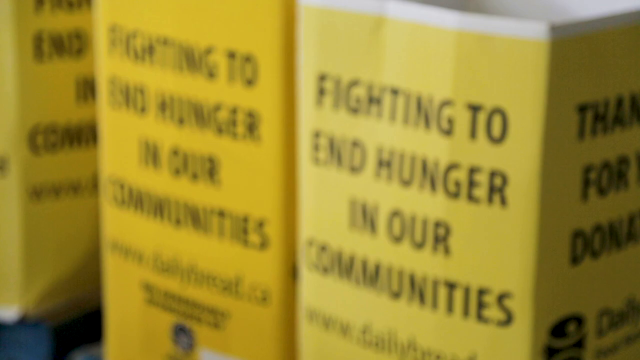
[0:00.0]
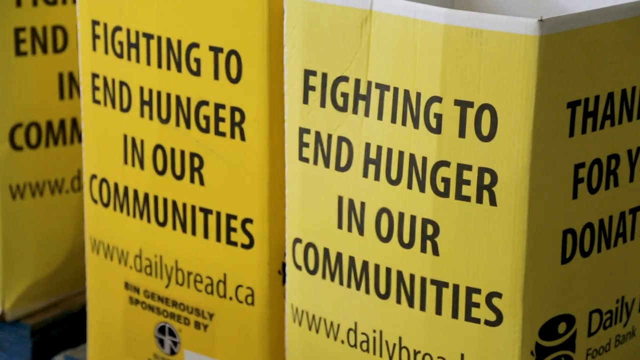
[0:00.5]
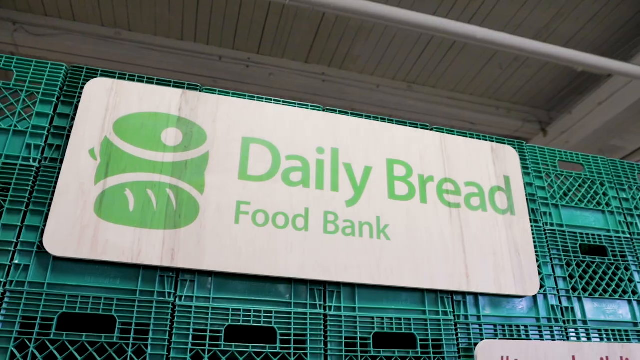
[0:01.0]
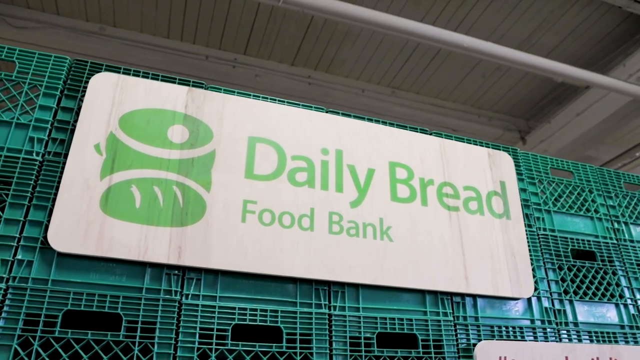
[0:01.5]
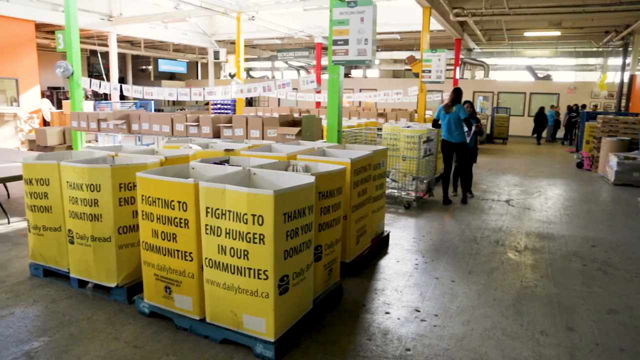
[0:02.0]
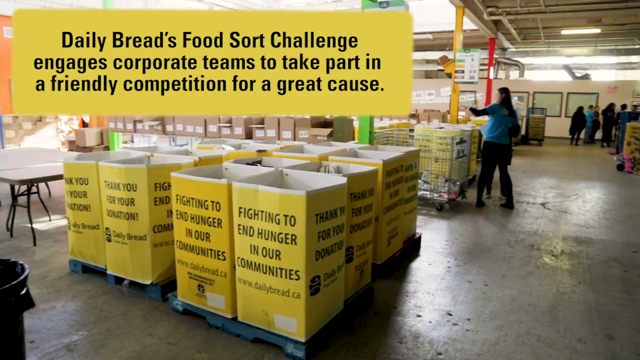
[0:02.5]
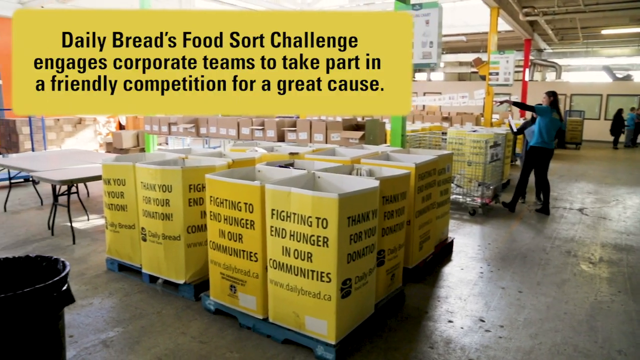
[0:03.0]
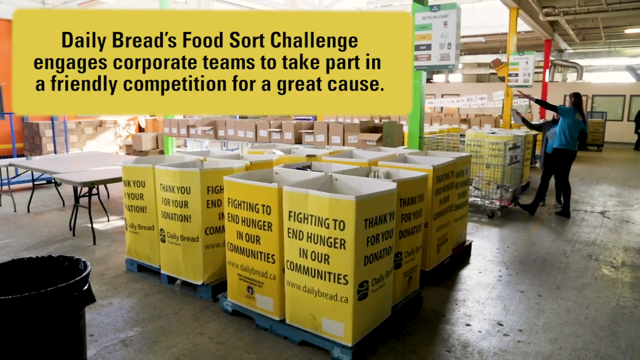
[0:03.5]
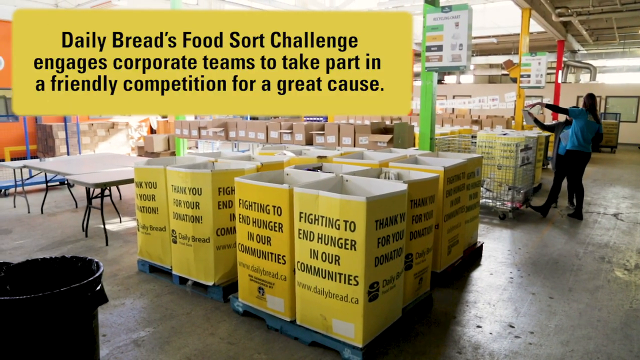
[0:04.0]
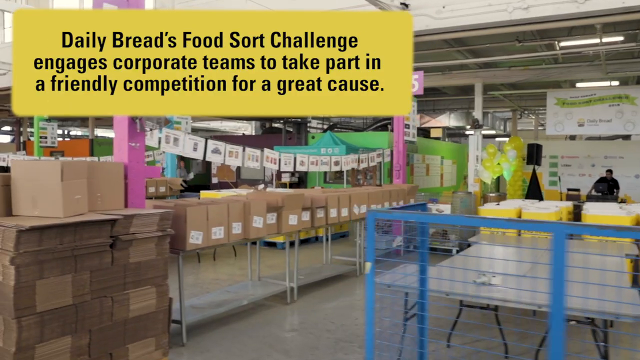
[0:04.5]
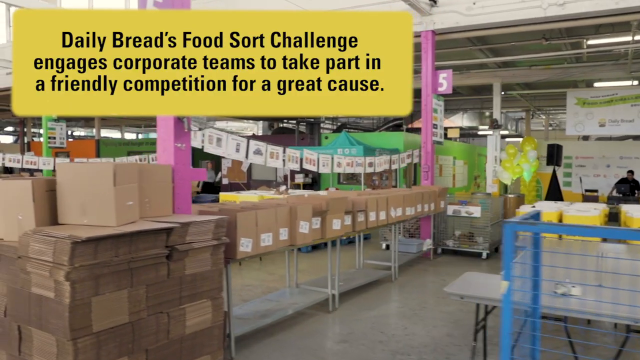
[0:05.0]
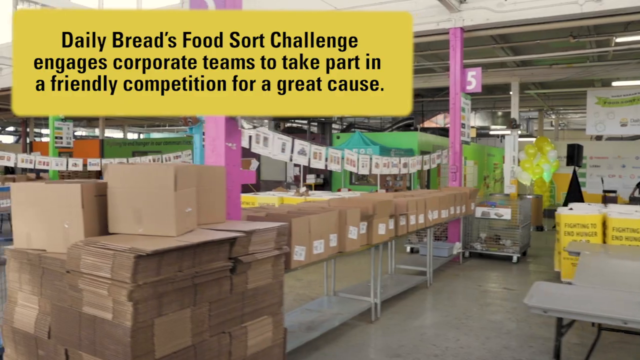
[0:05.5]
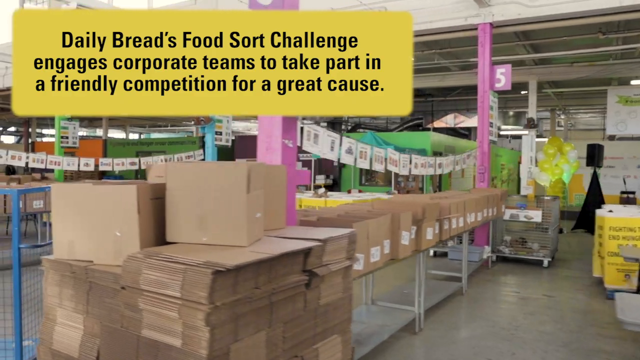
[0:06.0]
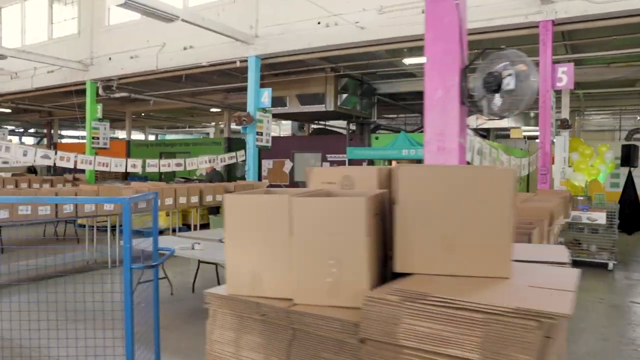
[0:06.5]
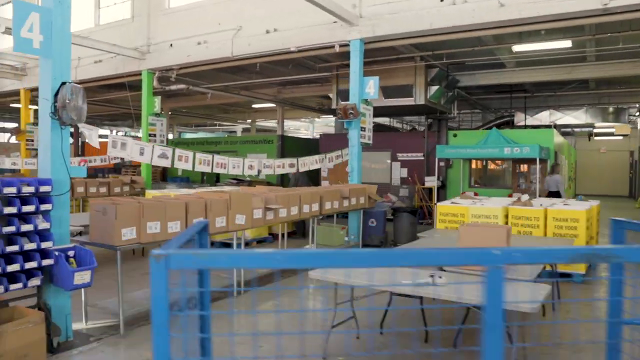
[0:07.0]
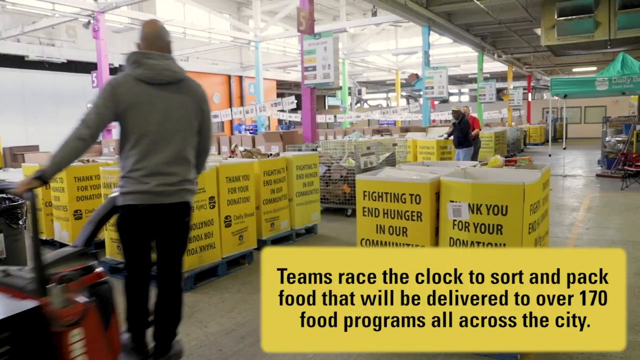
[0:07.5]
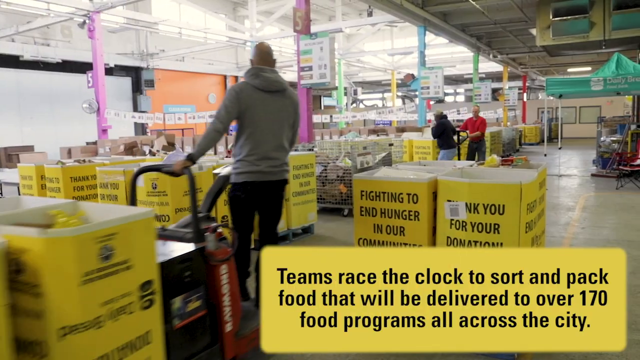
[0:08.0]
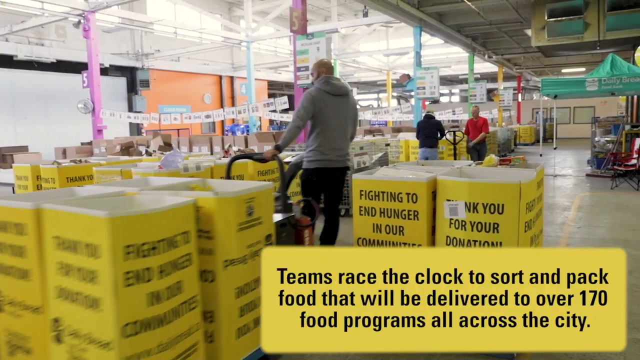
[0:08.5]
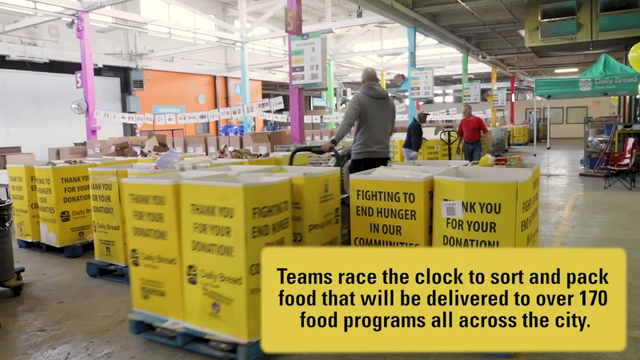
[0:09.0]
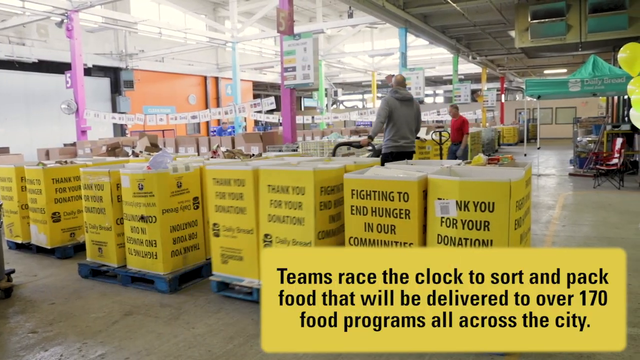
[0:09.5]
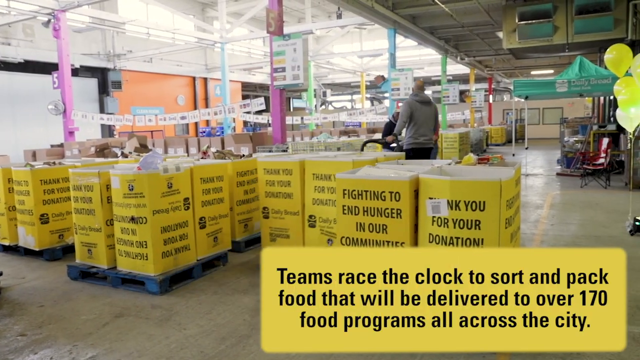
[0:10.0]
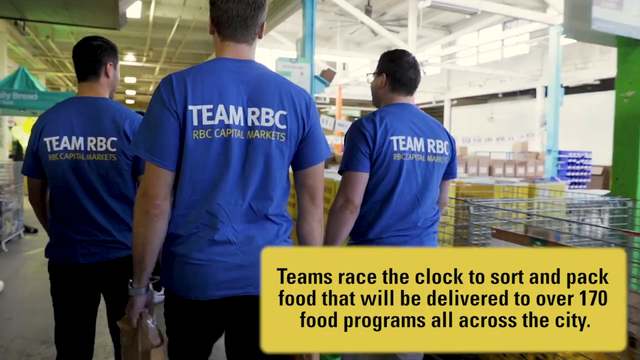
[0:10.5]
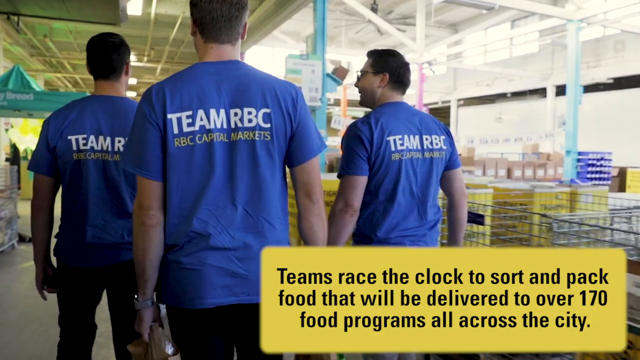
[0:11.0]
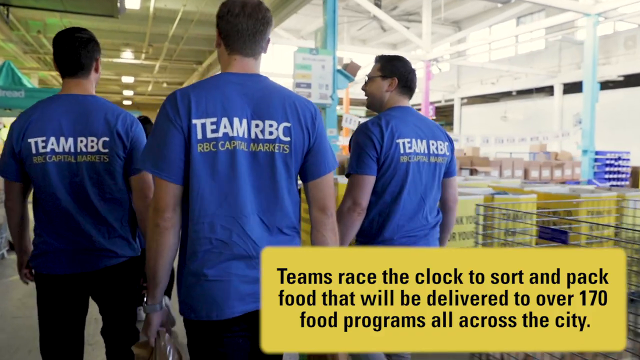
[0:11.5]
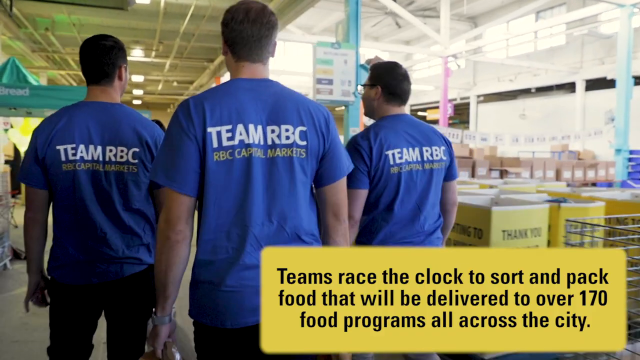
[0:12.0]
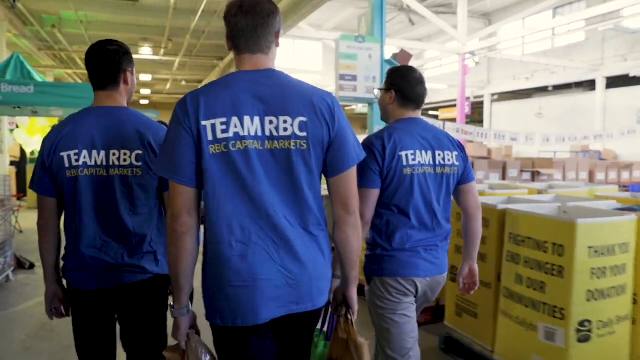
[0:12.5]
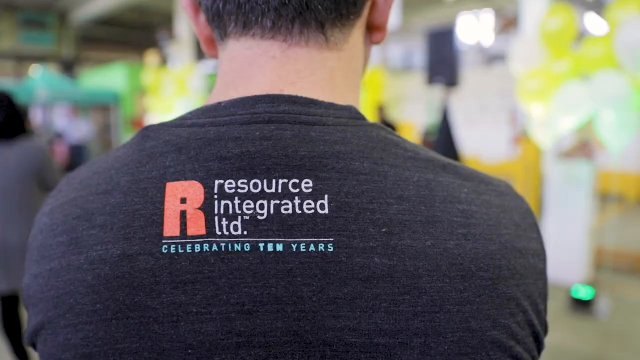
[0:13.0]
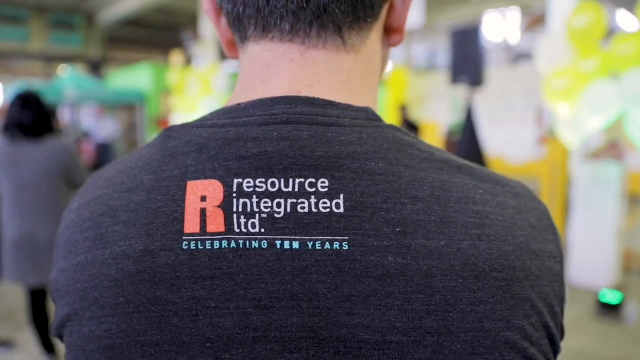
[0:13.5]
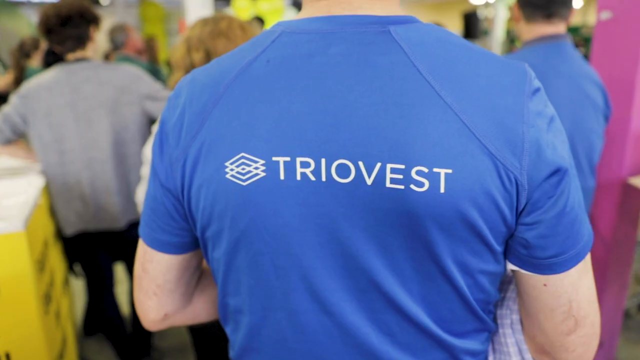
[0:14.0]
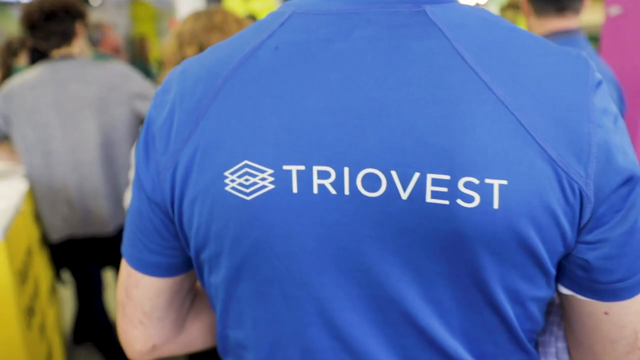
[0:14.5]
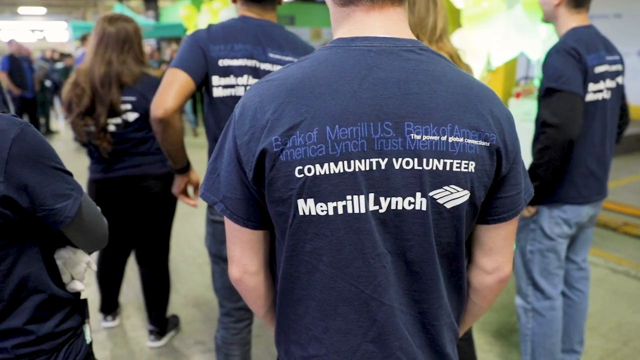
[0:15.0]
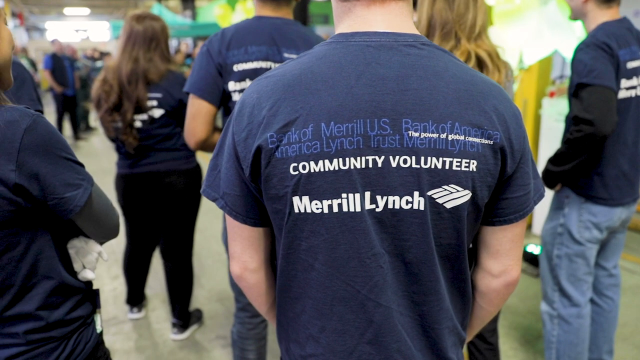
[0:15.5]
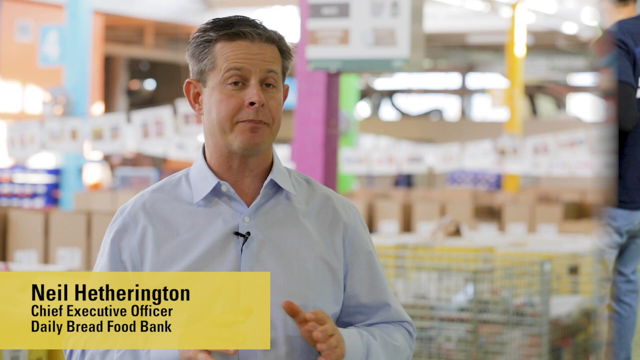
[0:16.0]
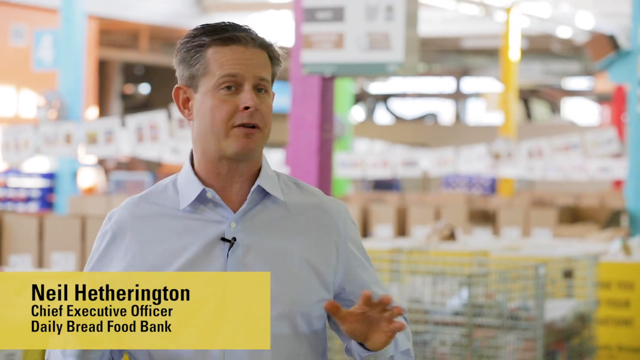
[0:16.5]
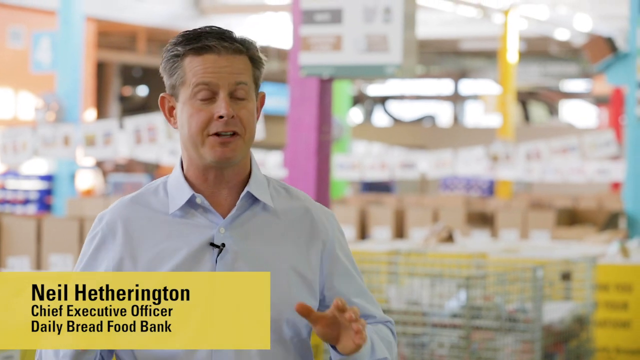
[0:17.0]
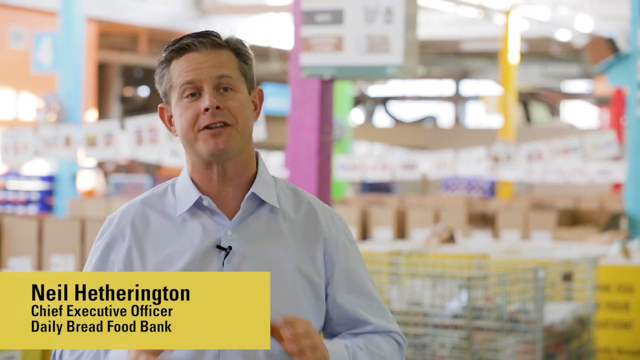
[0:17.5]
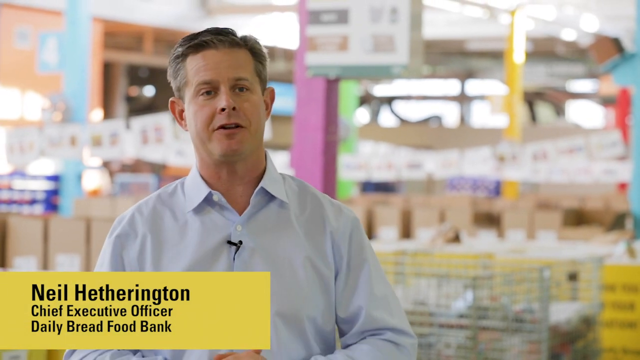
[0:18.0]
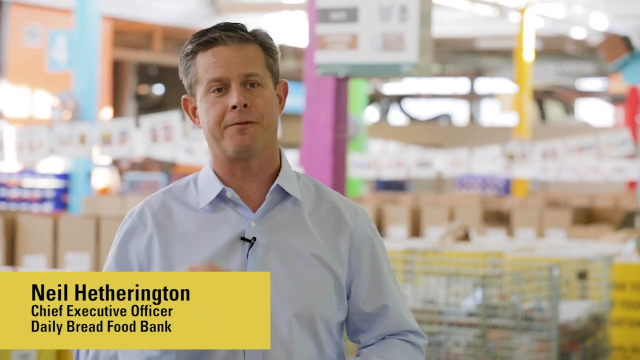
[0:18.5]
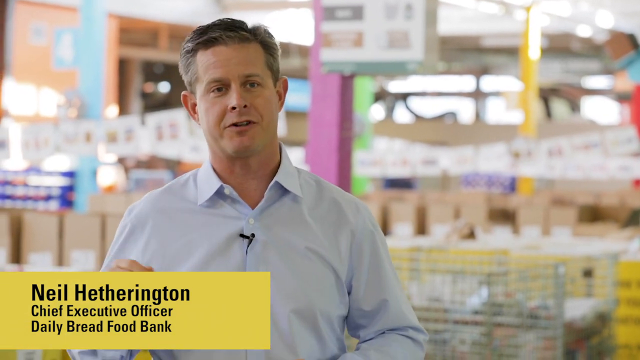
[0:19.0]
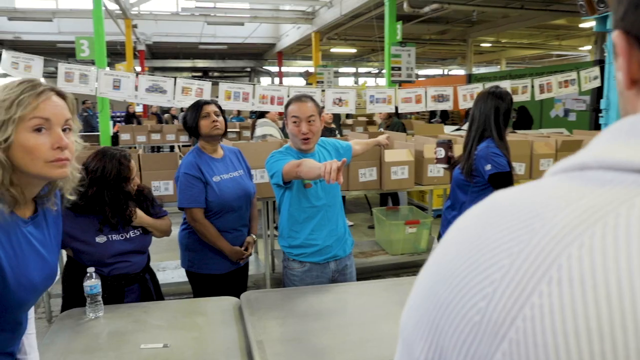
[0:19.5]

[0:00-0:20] Yellow coverings are over what appear to be boxes that are white on the inside; they are hard to make out but look kind of like boxes with the yellow coverings over their sides. Black text on them says "fighting to end hunger in our communities. www.dailybread.ca". The scene changes to what appear to be milk crates, green plastic crate-looking containers, with a white rectangular sign on their side that says "Daily Bread Food Bank". The video then changes to a warehouse-looking area, where the boxes with the yellow labels are seen better: big white boxes about three feet tall, maybe four, and about two feet long on each side, with yellow signs in black text that say "fighting to end hunger in our communities". At the top left corner, text says "Daily Bread's food sort challenge engages corporate teams to take part in a friendly competition for a great cause."